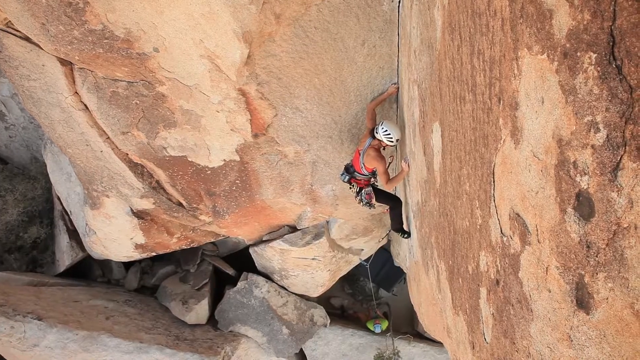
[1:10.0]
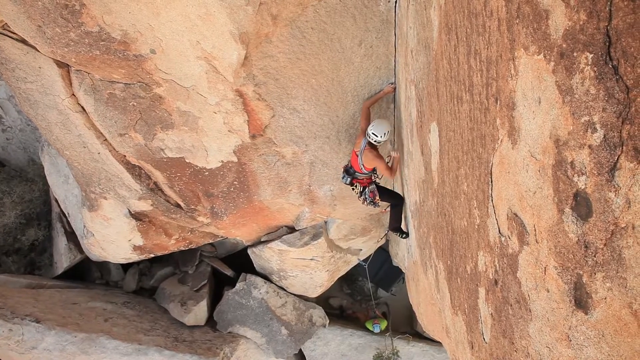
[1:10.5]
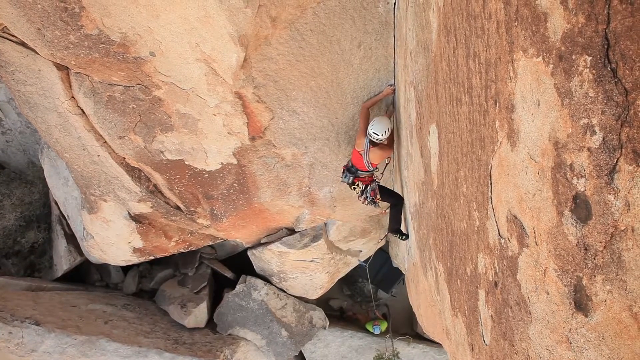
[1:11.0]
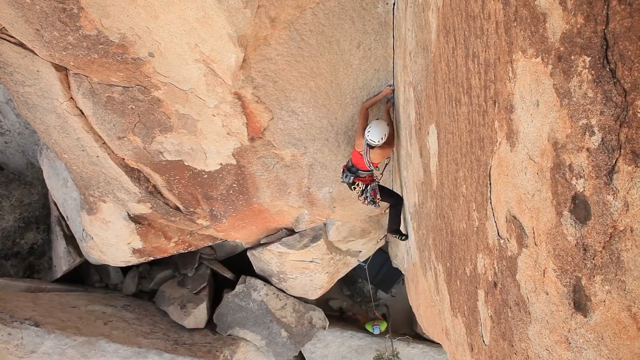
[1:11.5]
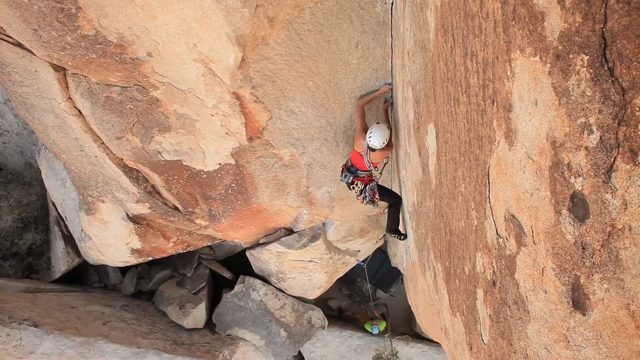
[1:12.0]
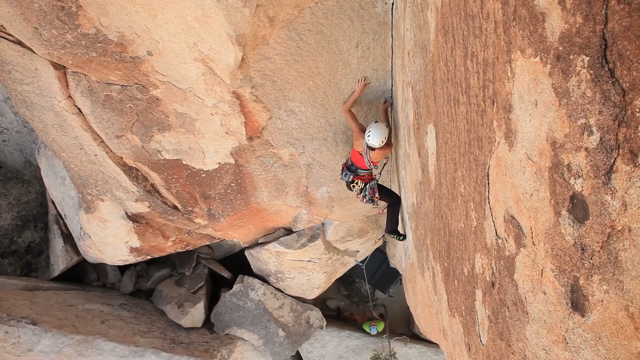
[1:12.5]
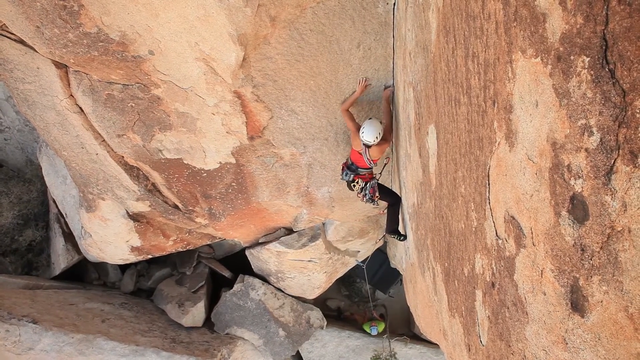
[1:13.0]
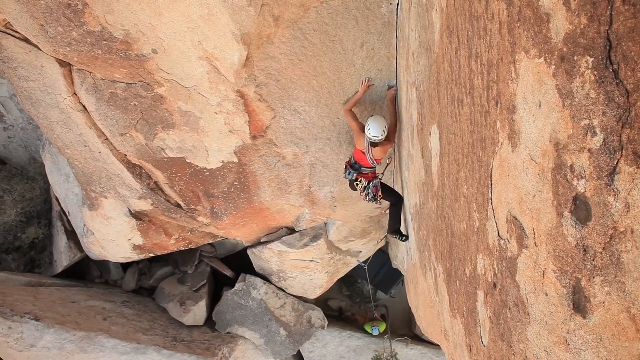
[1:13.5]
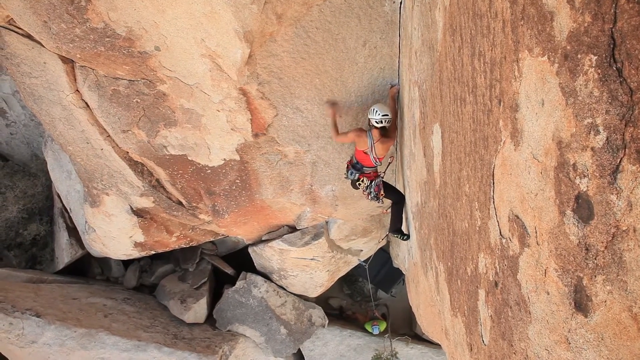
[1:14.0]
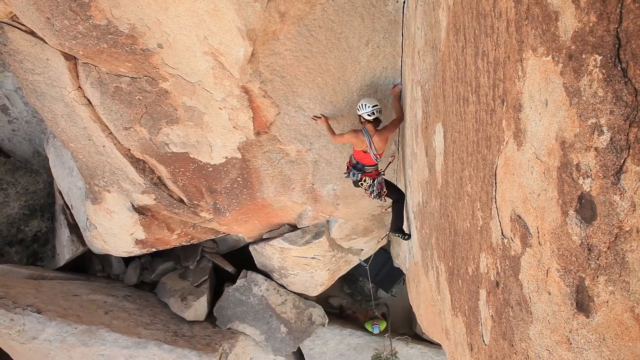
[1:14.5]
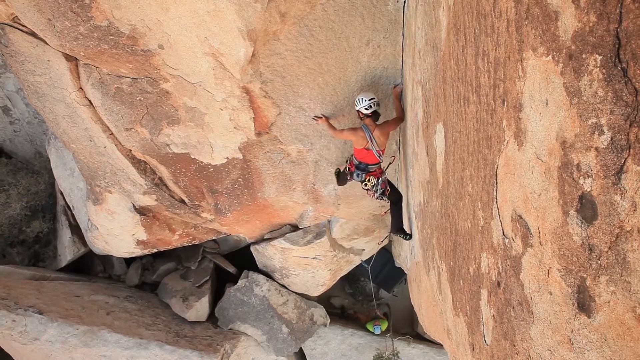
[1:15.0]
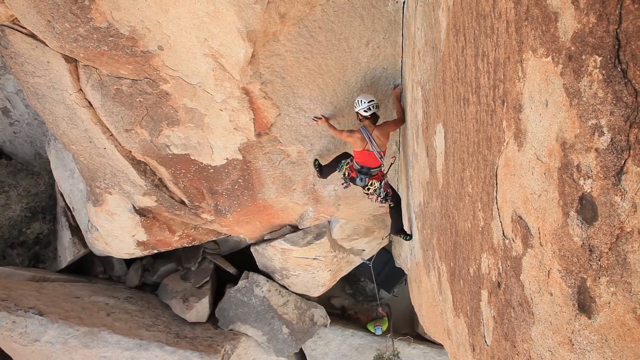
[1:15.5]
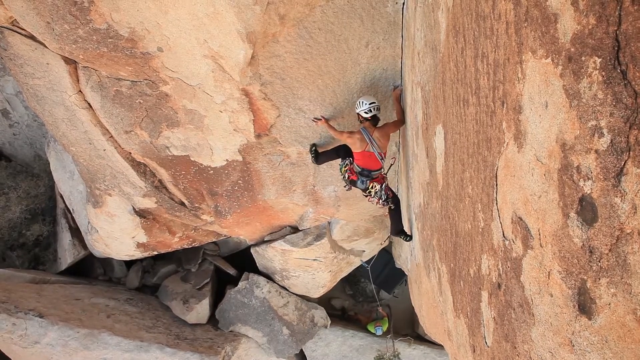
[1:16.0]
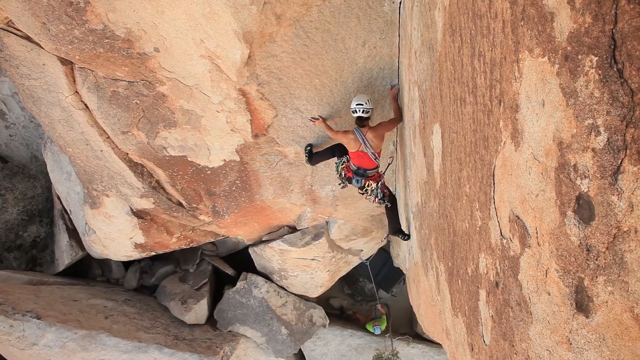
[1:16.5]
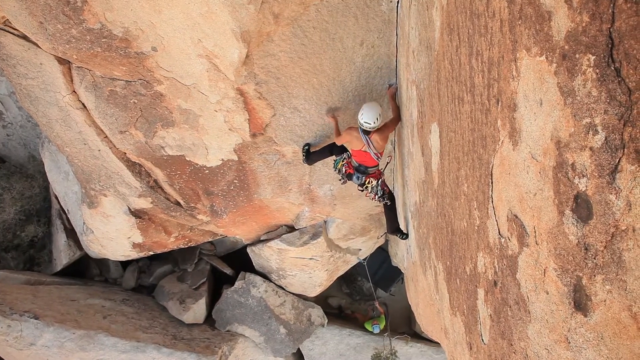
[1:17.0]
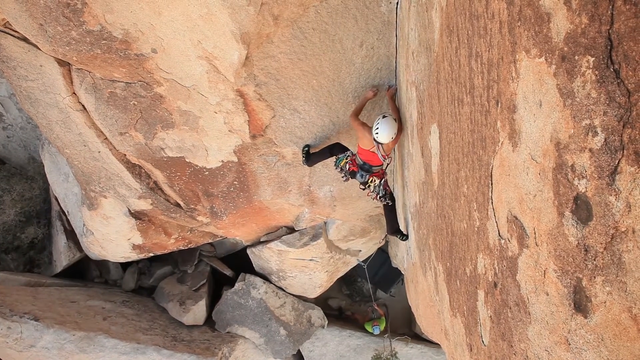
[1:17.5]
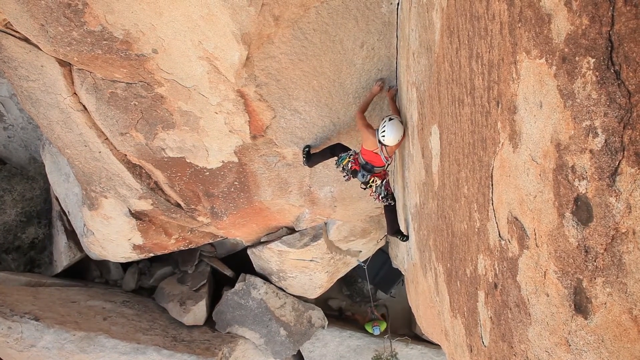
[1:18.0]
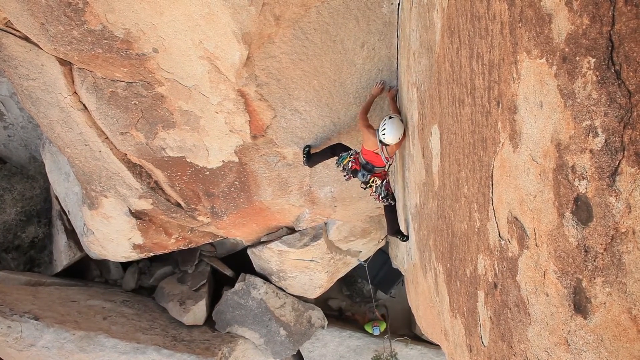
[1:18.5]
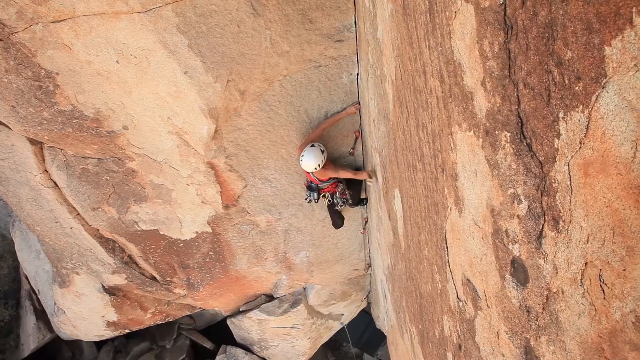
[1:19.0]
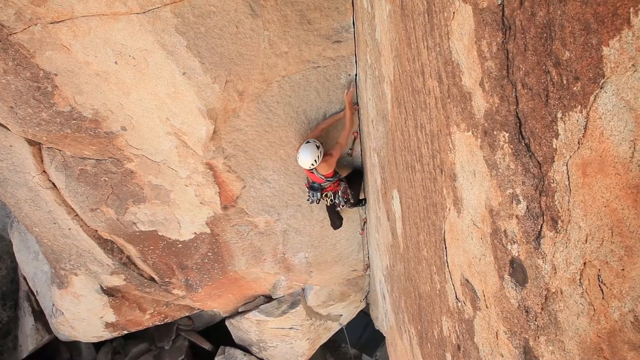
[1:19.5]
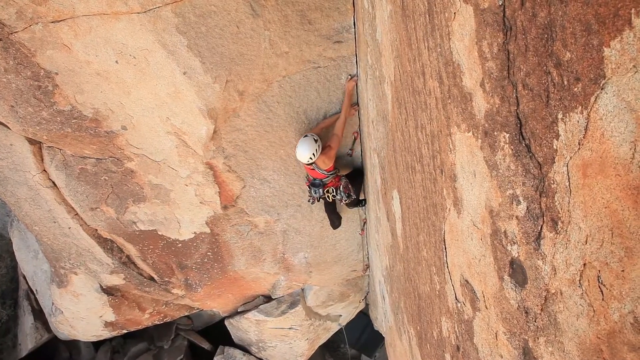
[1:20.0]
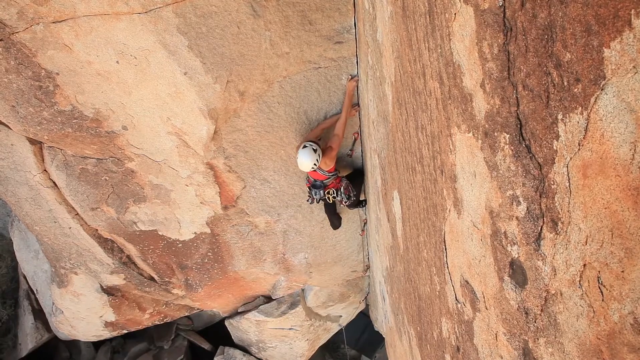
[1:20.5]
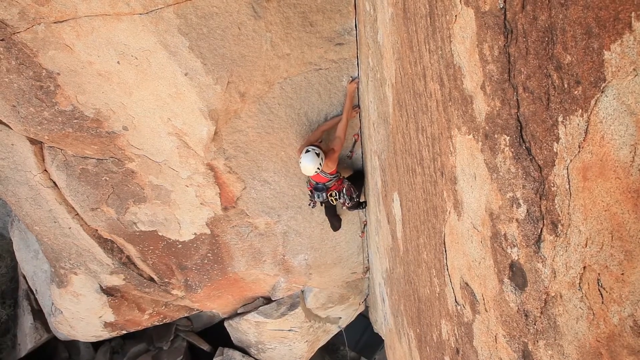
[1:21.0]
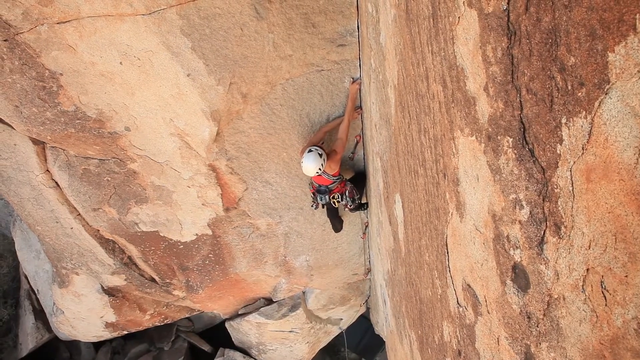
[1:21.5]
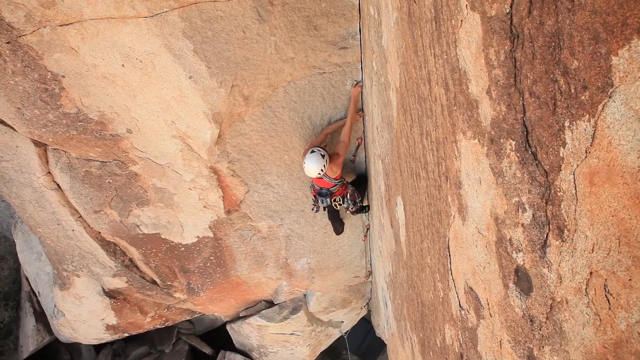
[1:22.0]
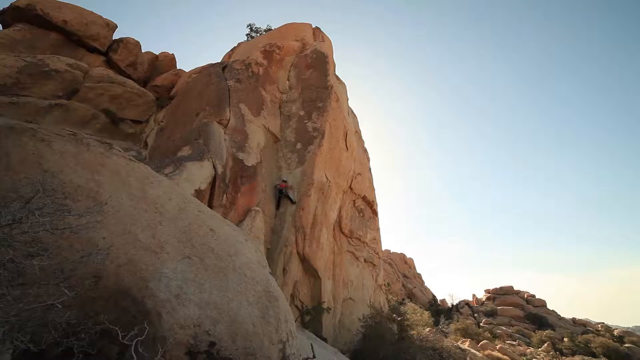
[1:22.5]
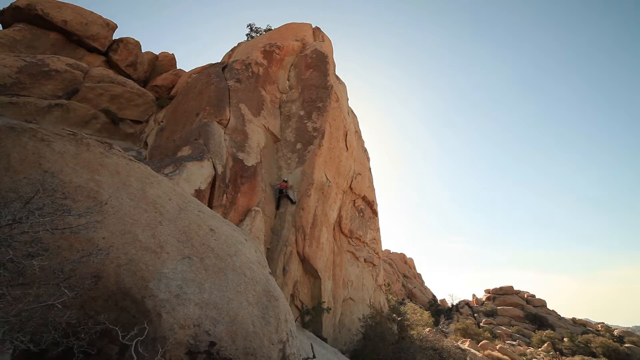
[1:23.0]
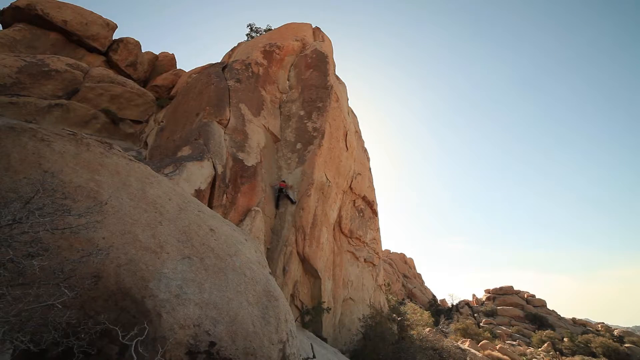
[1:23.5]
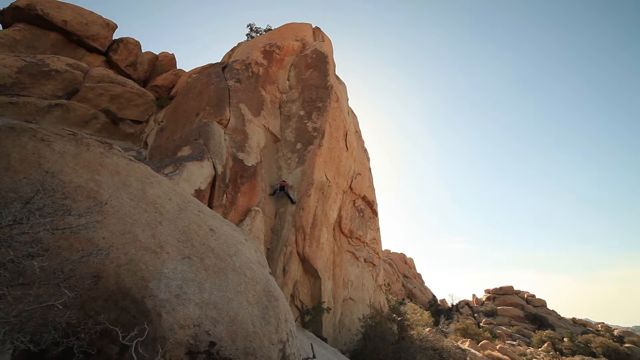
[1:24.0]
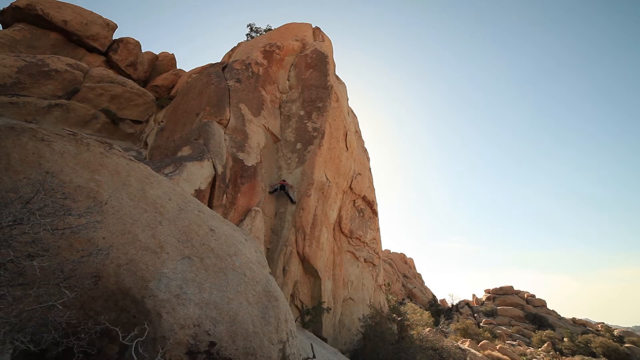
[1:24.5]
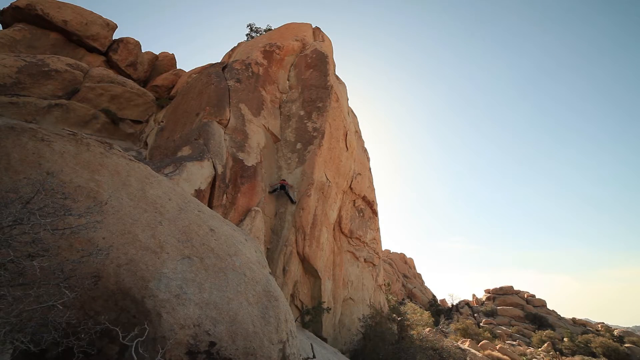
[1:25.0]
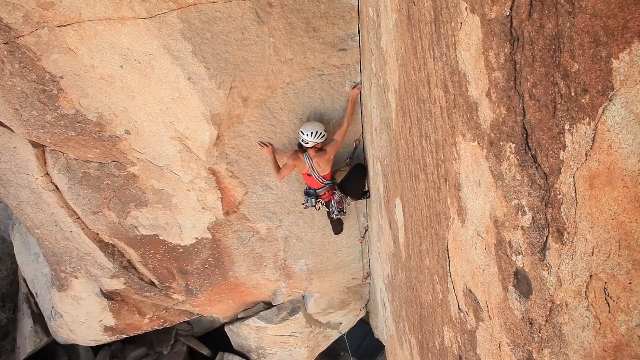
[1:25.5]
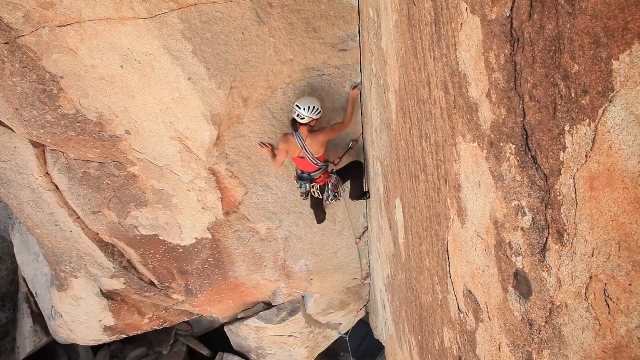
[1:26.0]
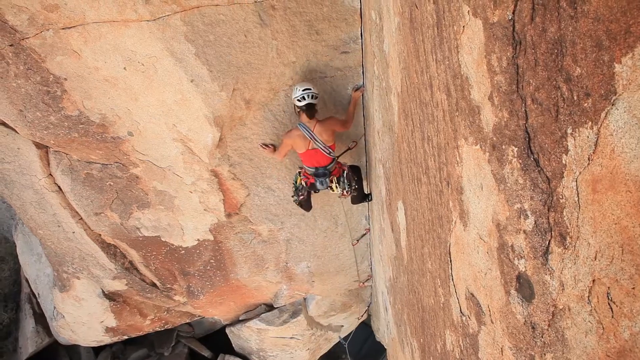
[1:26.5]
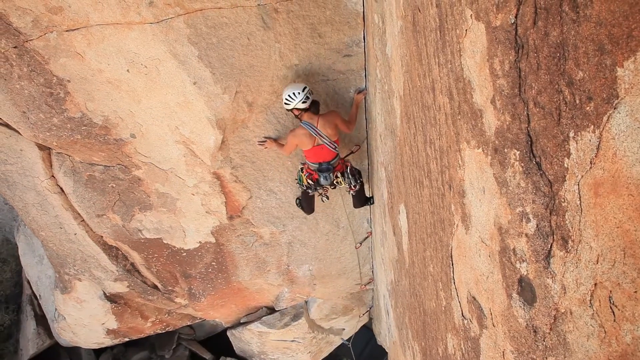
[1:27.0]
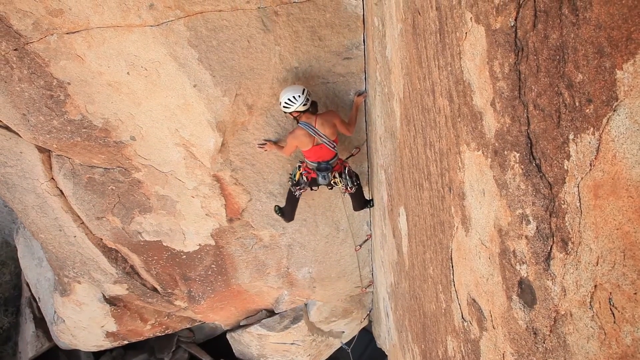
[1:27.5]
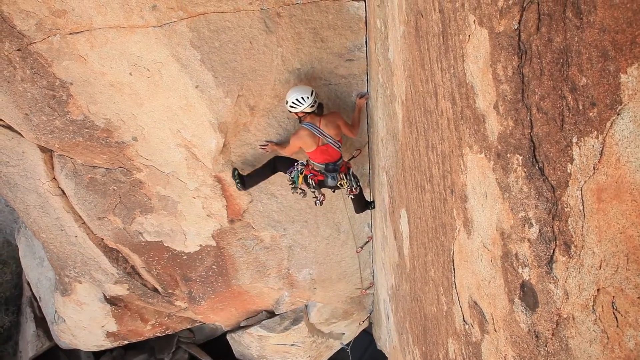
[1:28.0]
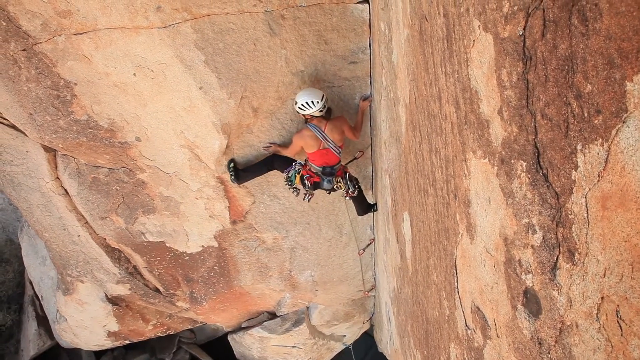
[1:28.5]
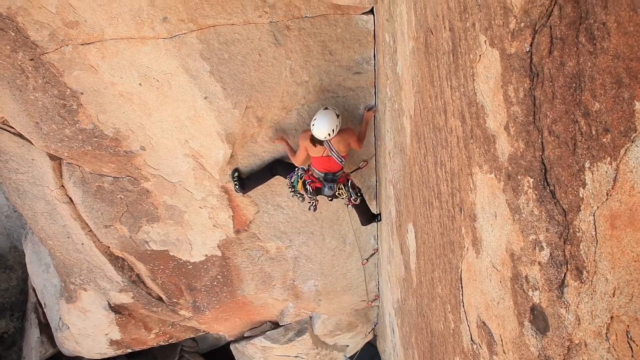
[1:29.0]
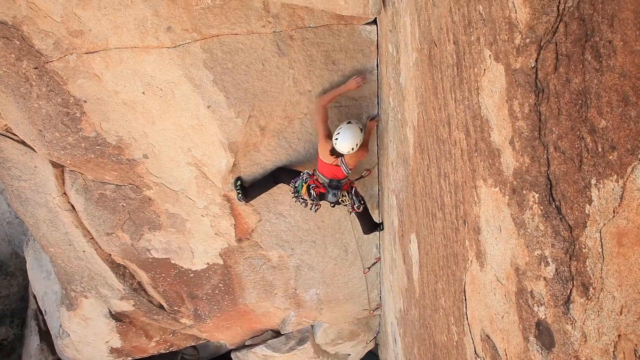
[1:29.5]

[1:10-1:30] A woman is rock climbing, really high up, perhaps 50 feet or higher. She wears a white helmet, a pink top and black pants, and has a lot of hooks and gear on her waist connected to a rope. A man all the way at the bottom is apparently watching her and holding the rope. She slowly gets higher, her feet spread apart for a good grip. The camera zooms out and shows her from afar; she looks very small compared to the huge rock, maybe halfway to the top.